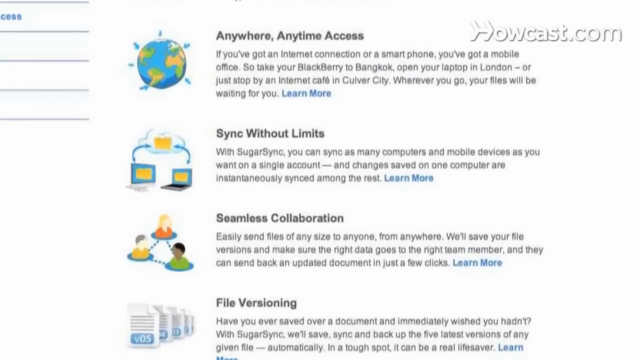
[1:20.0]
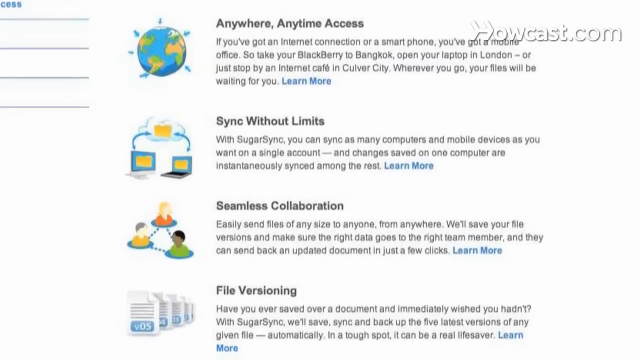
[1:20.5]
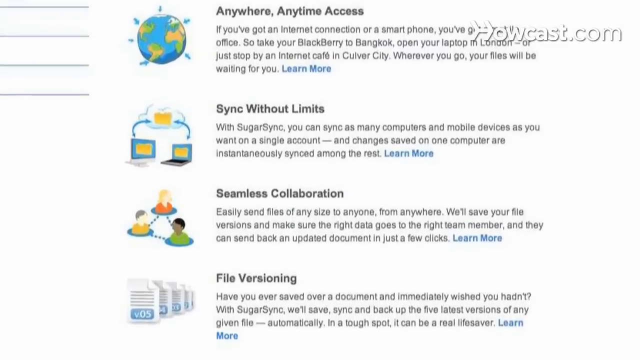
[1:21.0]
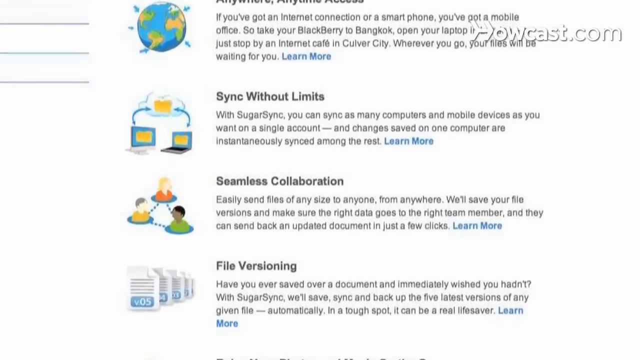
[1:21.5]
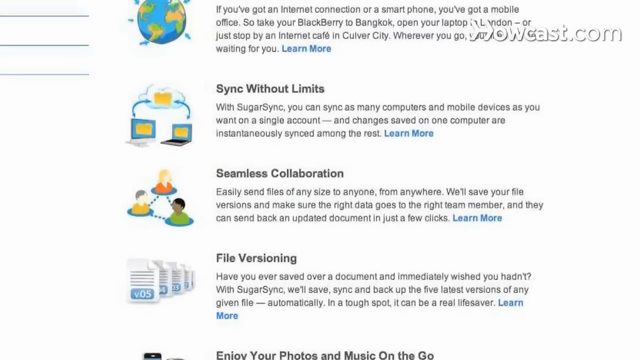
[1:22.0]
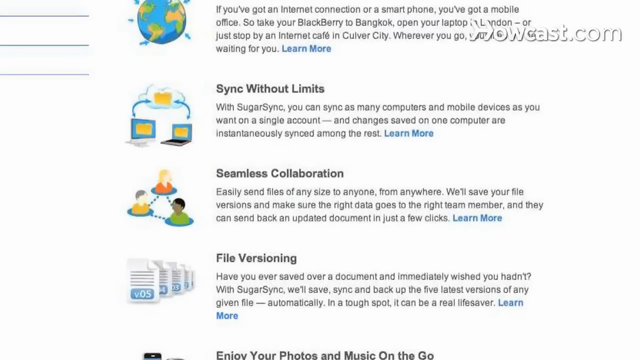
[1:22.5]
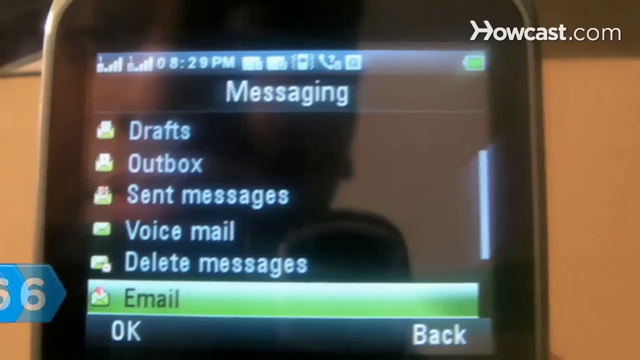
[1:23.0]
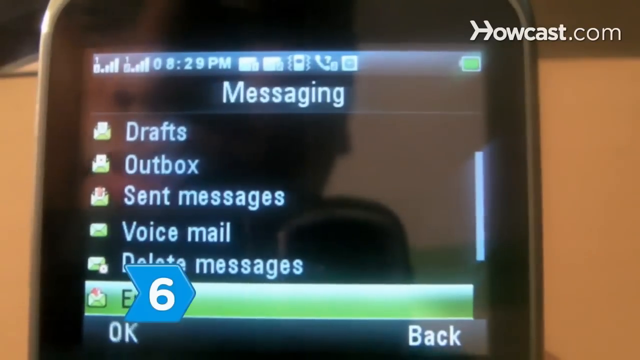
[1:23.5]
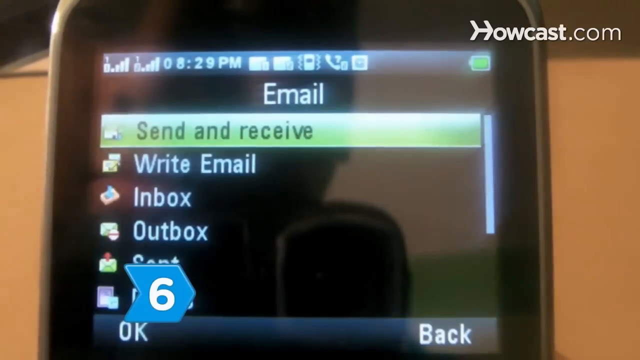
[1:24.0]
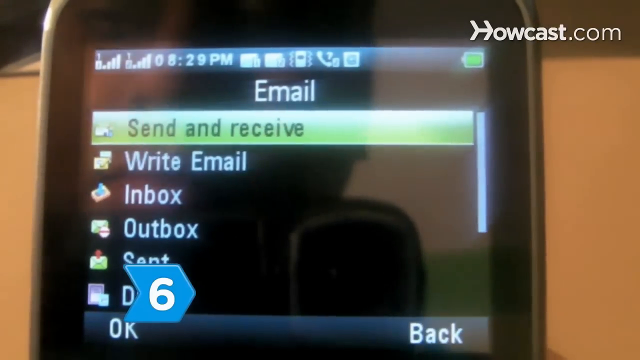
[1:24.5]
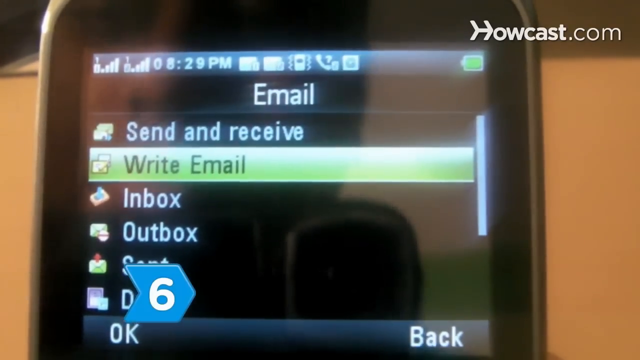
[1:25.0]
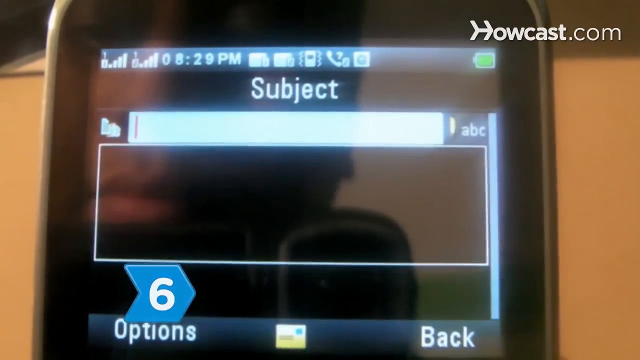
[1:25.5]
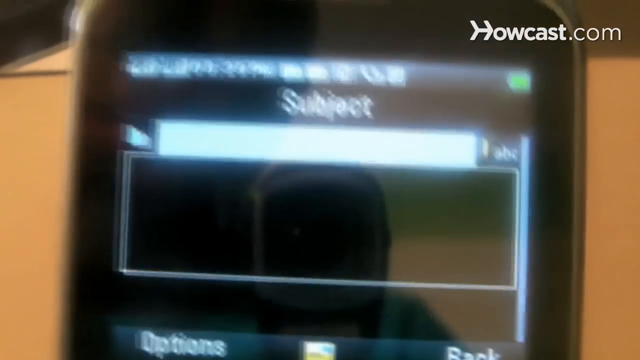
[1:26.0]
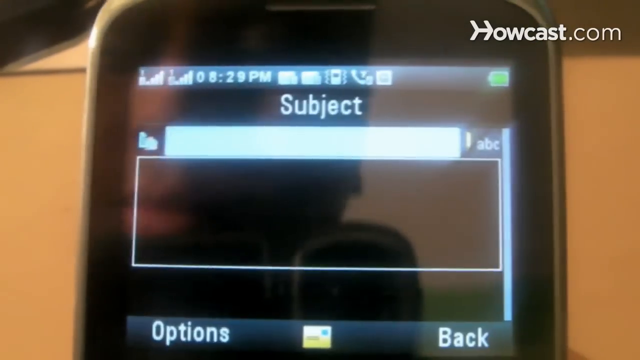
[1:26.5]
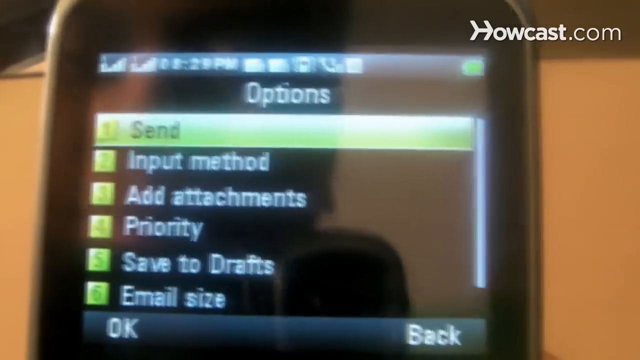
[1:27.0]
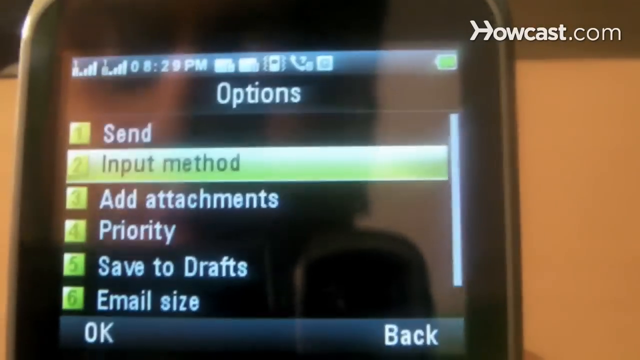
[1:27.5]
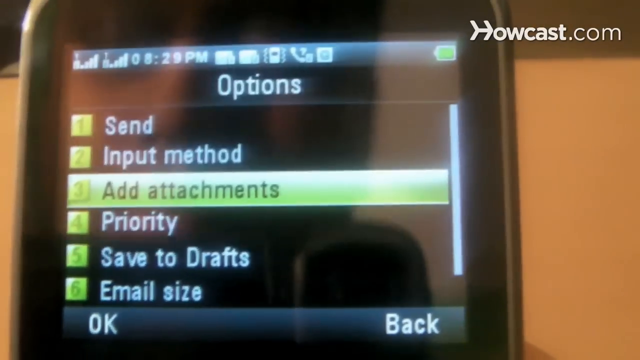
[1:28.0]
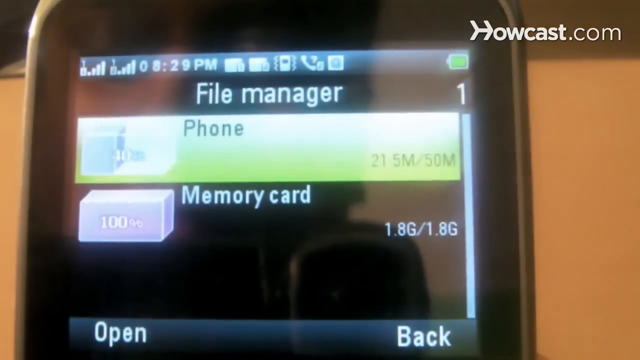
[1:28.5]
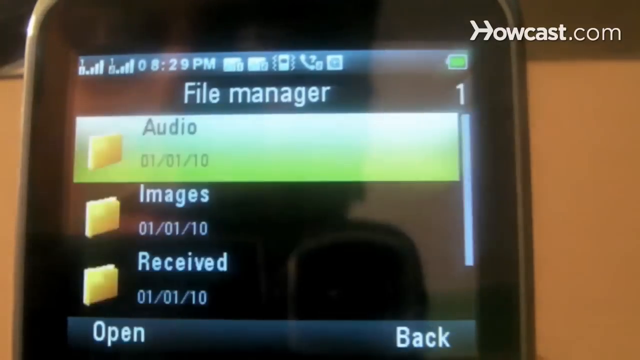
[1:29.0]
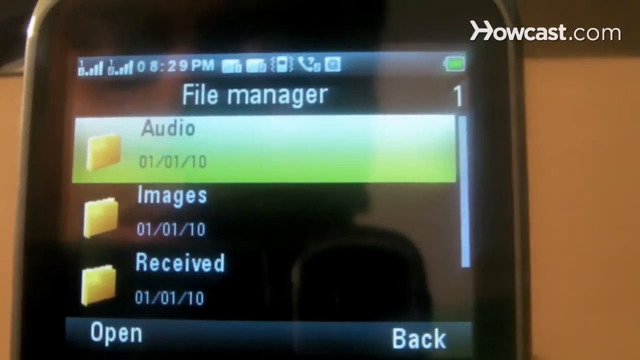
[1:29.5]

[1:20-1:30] The user goes through the web page made for backing up photos, which lists its characteristics: the information can be accessed anywhere at any time, it can sync without limits, it allows seamless collaboration between many people, and there are many versions of the same file. The sixth step, sending the image by email, is shown next: on the phone the user goes into the email option, writes an email, and goes into the options to add an attachment, which is an image.